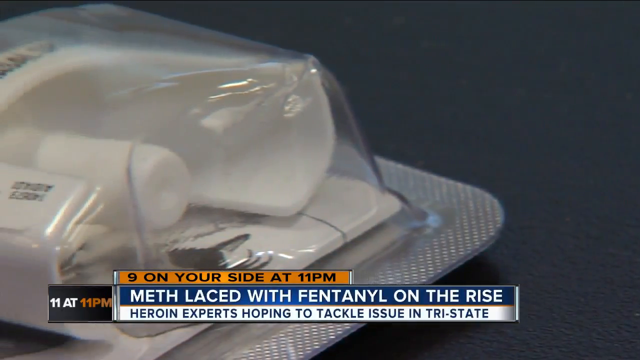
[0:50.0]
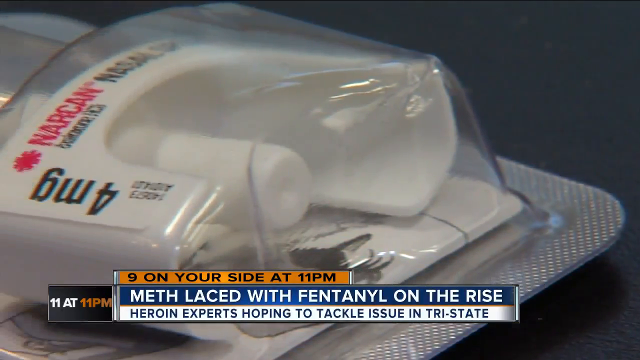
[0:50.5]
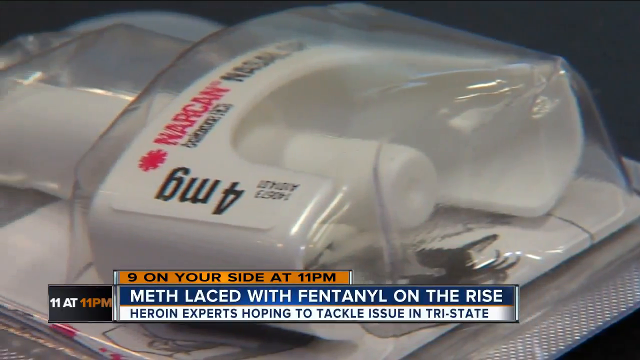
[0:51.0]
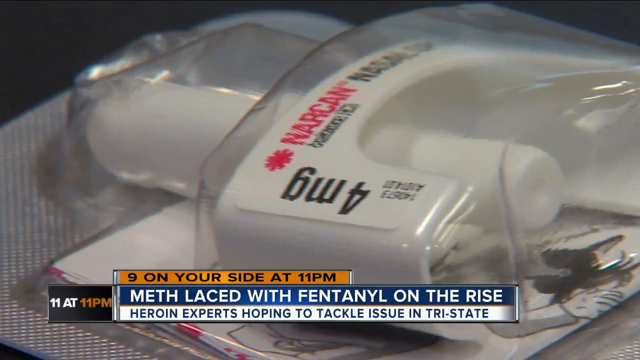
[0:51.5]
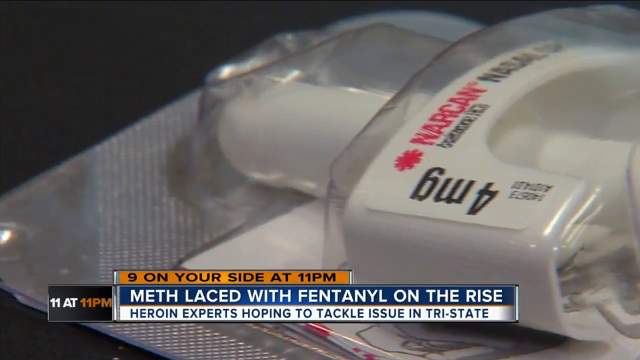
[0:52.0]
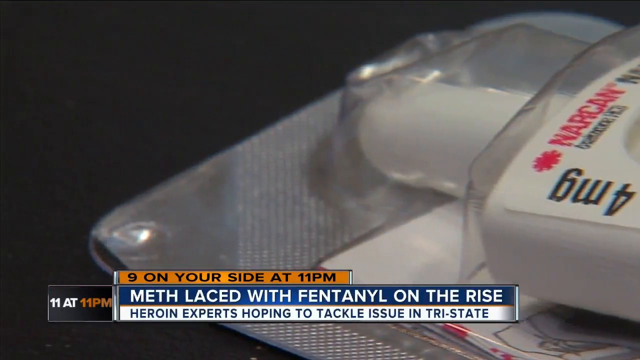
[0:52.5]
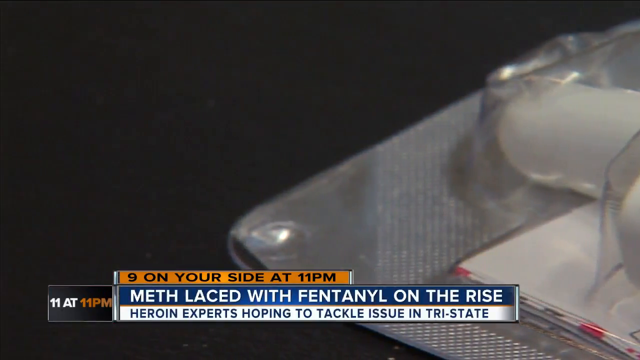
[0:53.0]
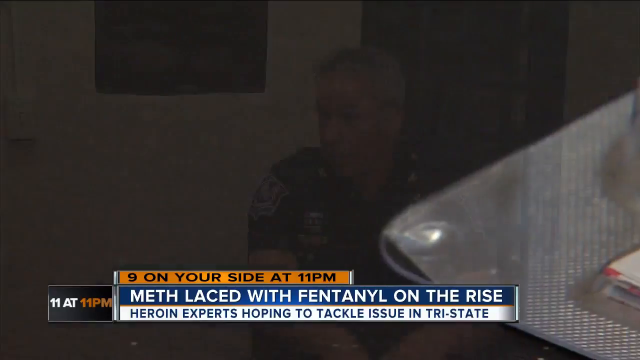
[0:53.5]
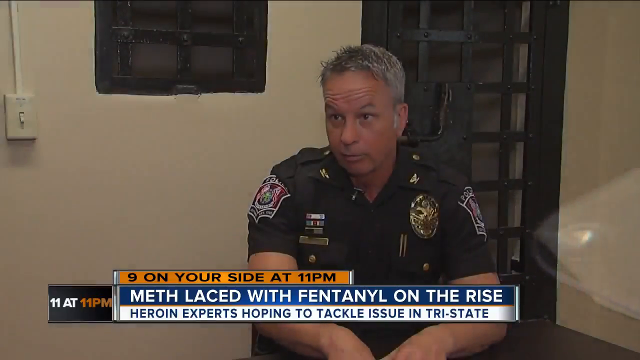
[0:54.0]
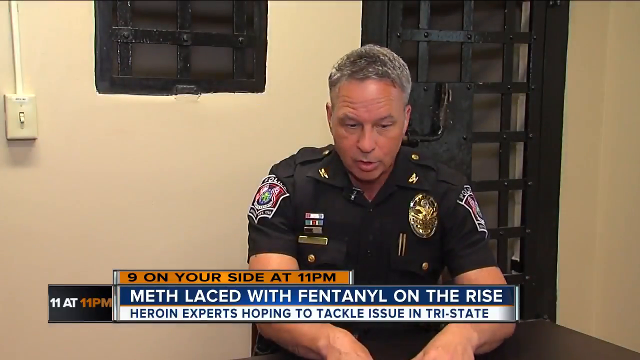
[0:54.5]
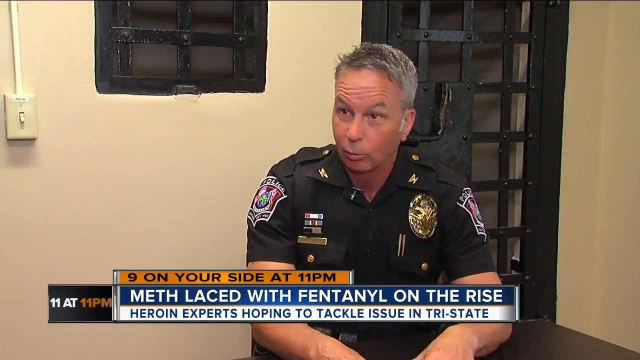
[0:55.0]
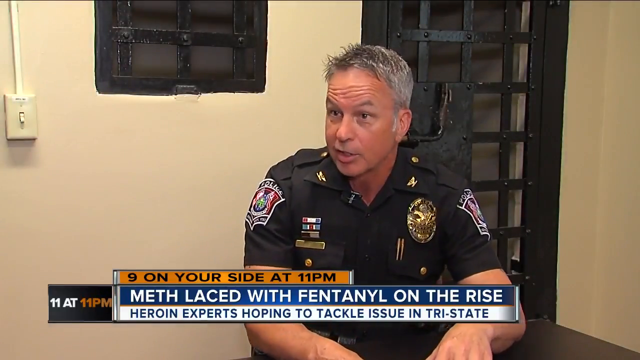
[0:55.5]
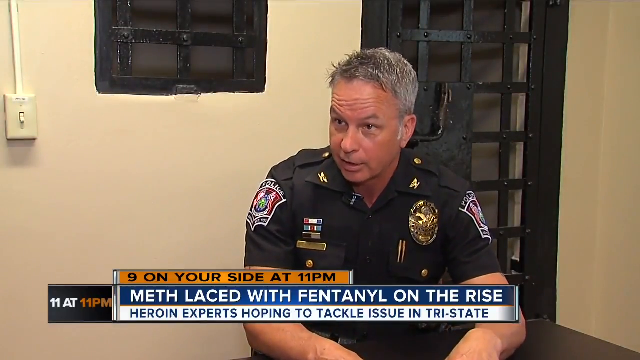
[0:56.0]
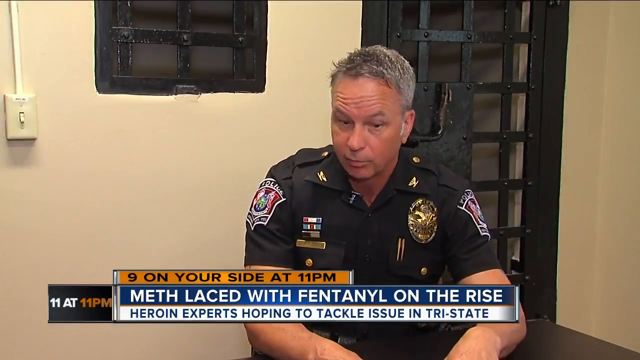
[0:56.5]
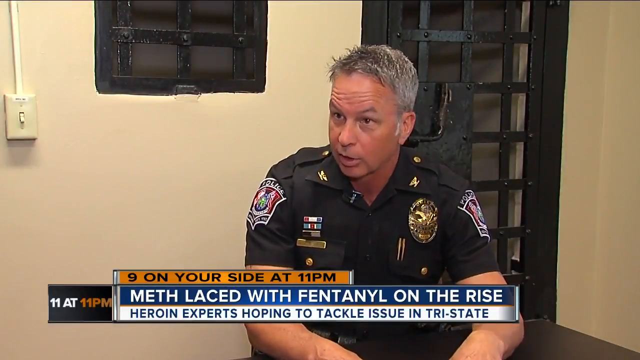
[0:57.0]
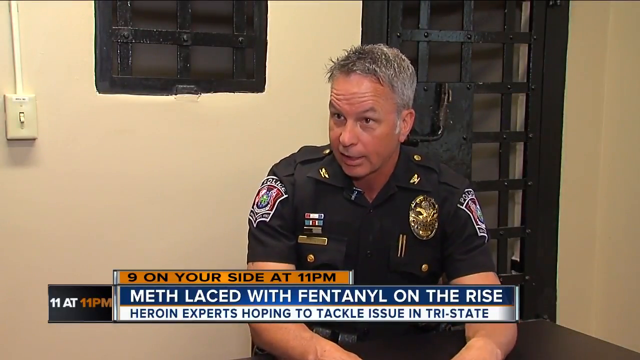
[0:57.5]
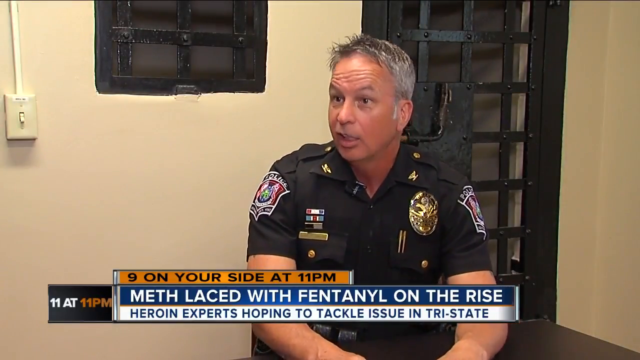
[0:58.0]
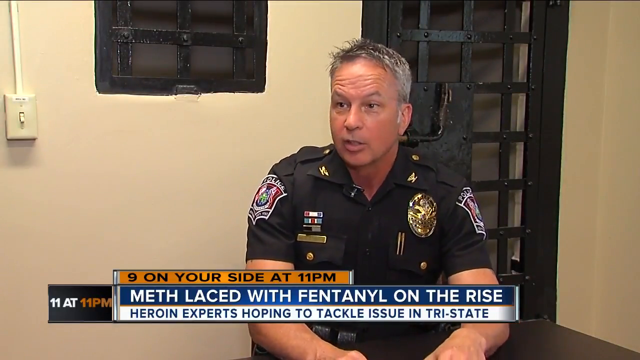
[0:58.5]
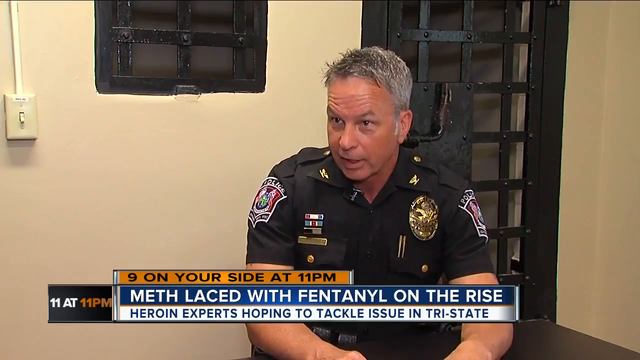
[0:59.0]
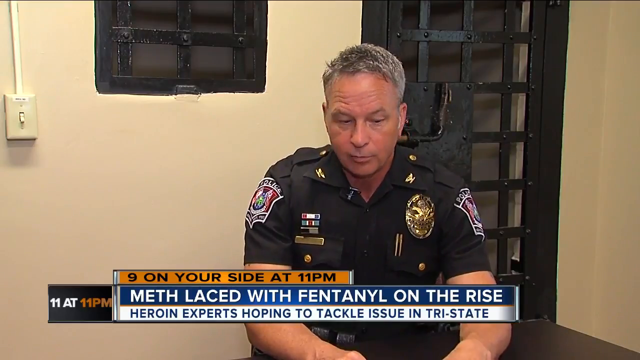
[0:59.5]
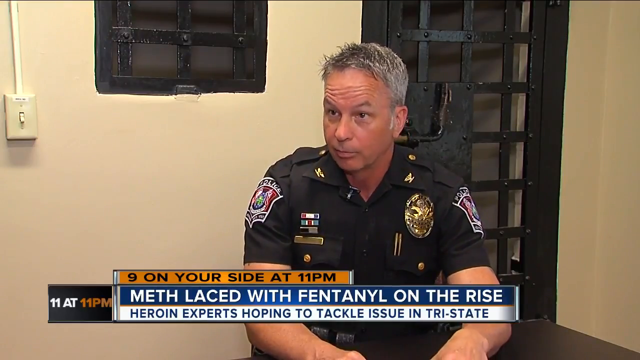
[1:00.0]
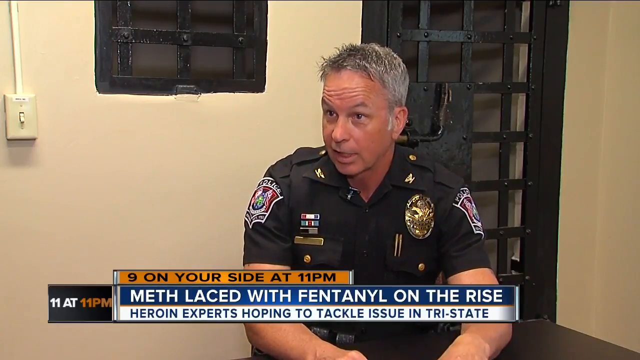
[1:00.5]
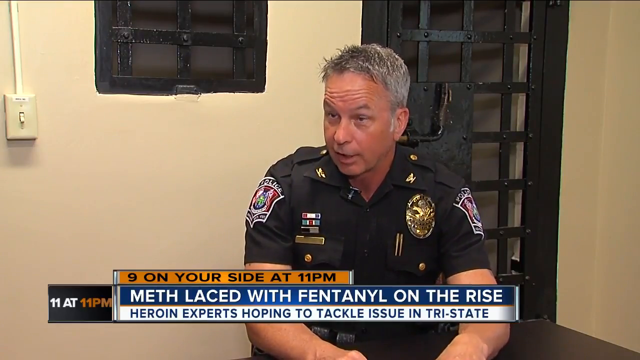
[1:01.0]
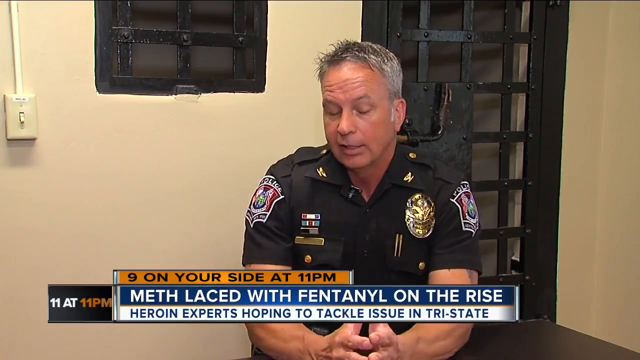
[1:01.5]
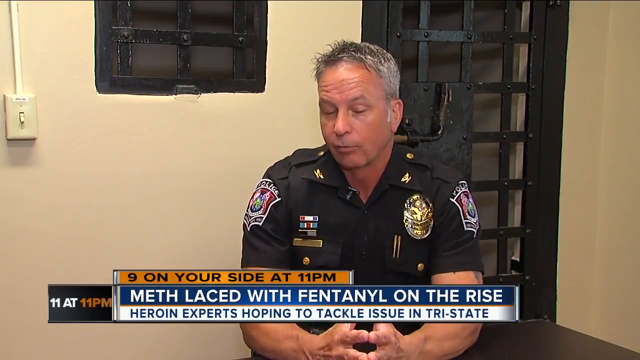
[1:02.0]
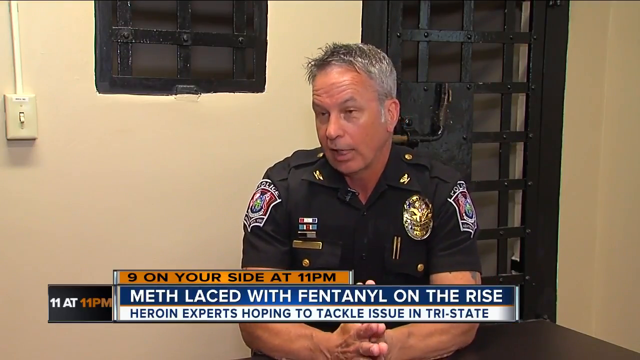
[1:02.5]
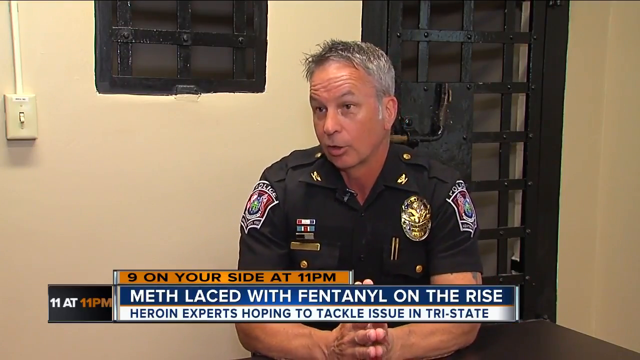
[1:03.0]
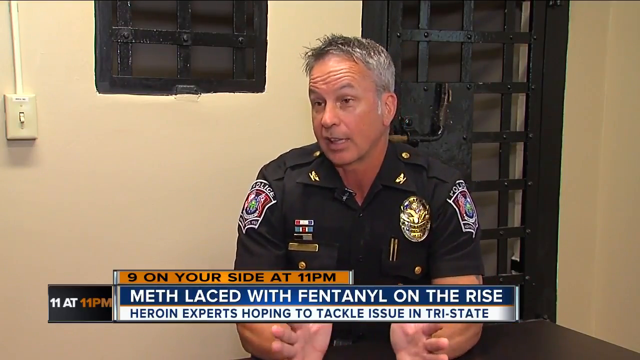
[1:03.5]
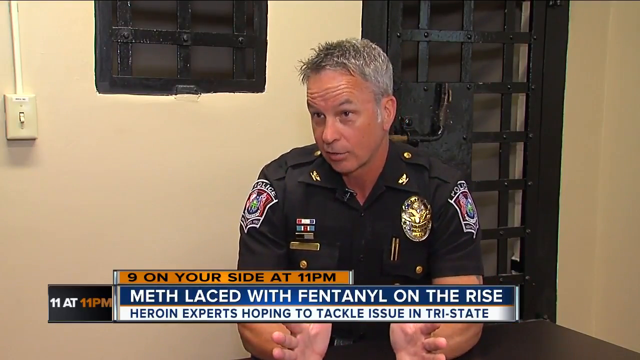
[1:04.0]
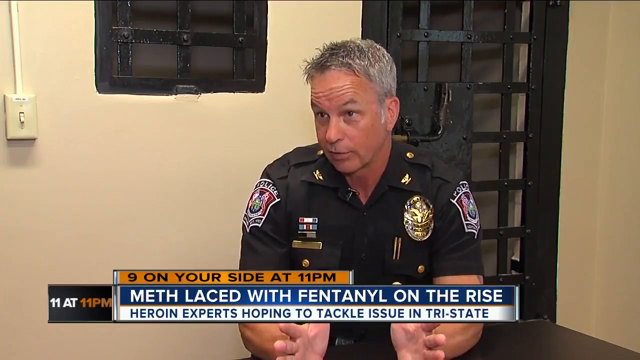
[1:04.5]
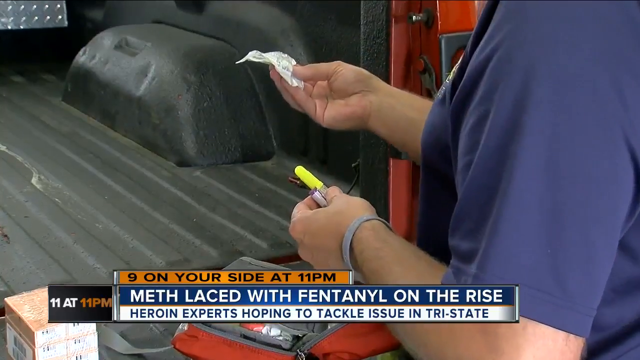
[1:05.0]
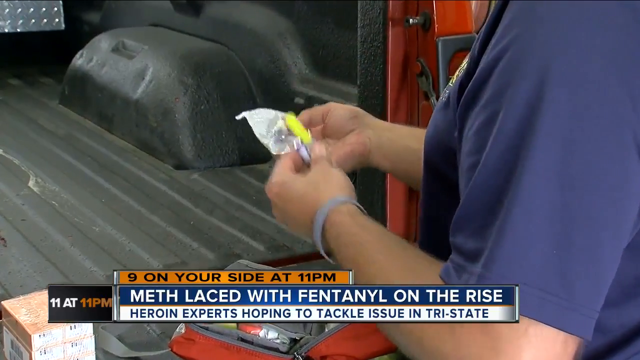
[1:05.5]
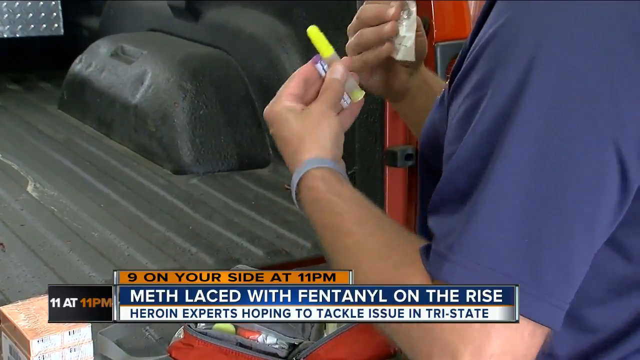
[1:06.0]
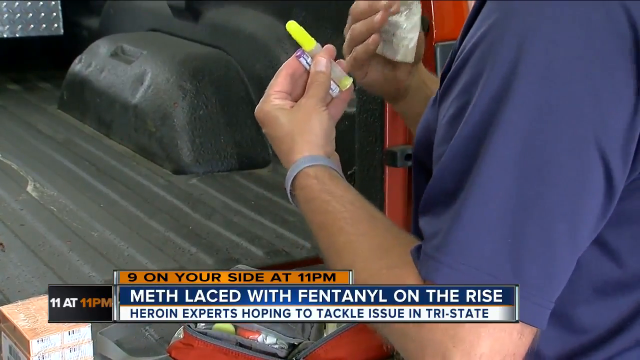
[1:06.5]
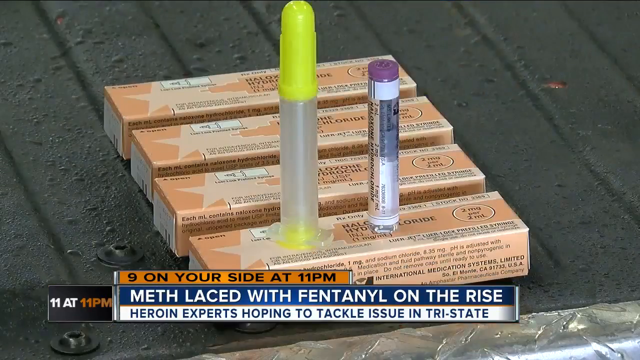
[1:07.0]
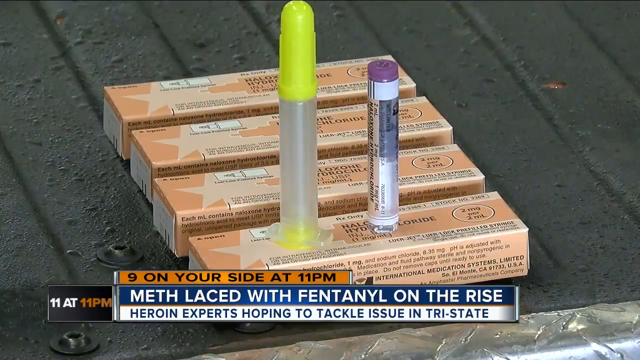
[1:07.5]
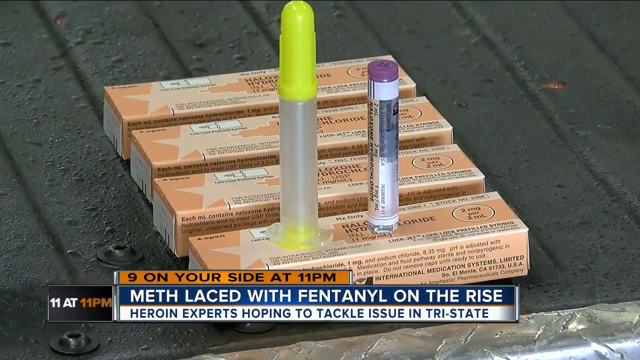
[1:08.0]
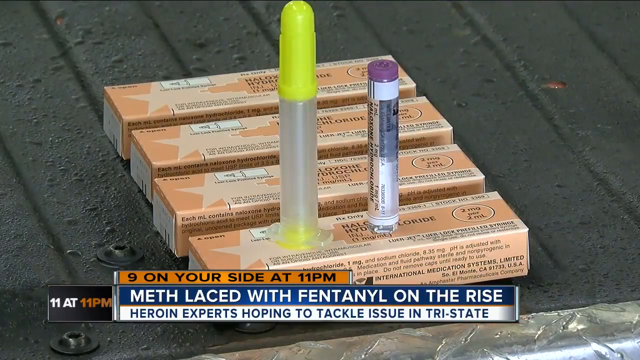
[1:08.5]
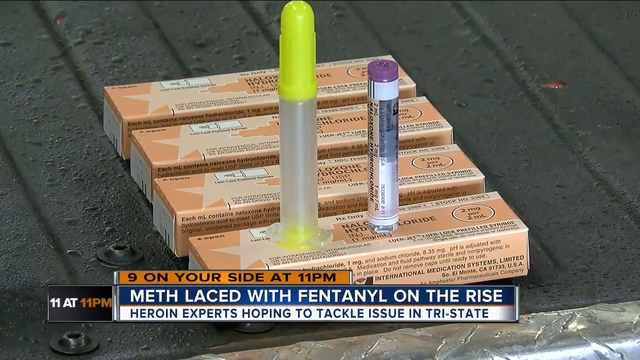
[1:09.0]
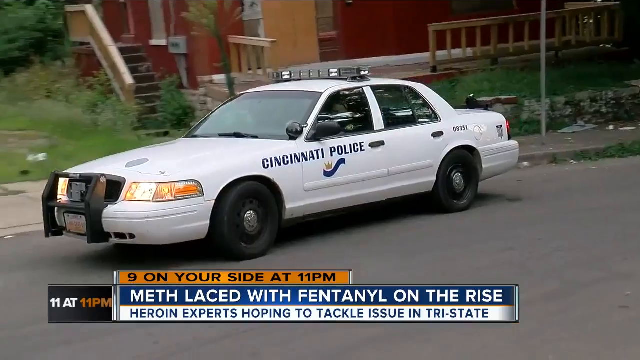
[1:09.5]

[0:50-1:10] A close-up shows a Narcan pre-filled nasal system. At the bottom of the screen is the headline in white letters on a blue background, ending "fentanyl on the rise", and beneath it in blue letters on a white background, "heroin experts hoping to tackle issue in tri-state". The camera pans to the right, revealing that it is a four milligram Narcan. The policeman is shown talking again, shaking his head as he talks, very serious, raising his eyebrows. A man then shows a different Narcan system, and the camera shows four orange Narcan boxes in a column with an open system on top. The cartridge is on the right, a small tube with a silver label and a purple lid, and the applicator is stood up next to it, an opaque tube with a bright yellow rounded lid and base. Next is a shot of a police car driving.